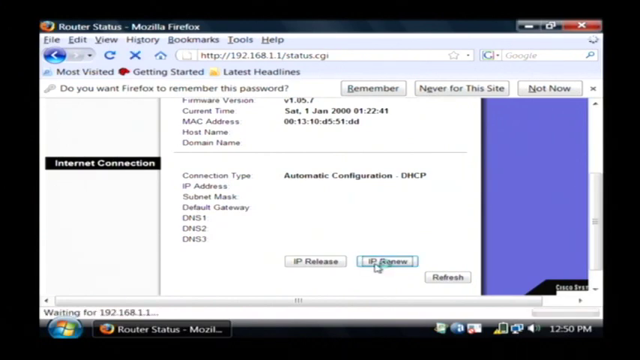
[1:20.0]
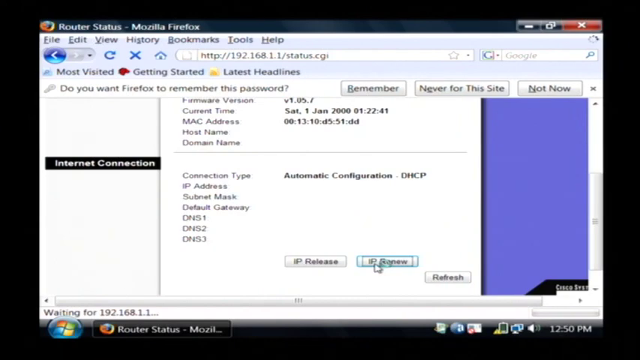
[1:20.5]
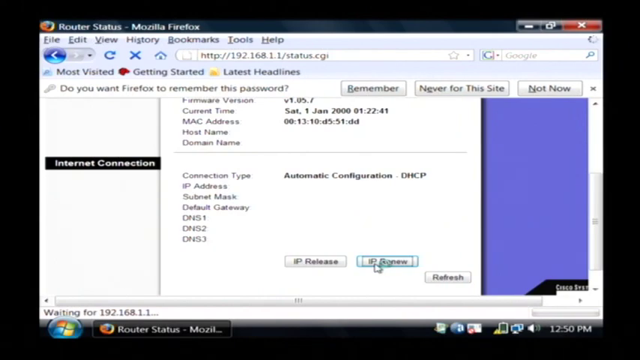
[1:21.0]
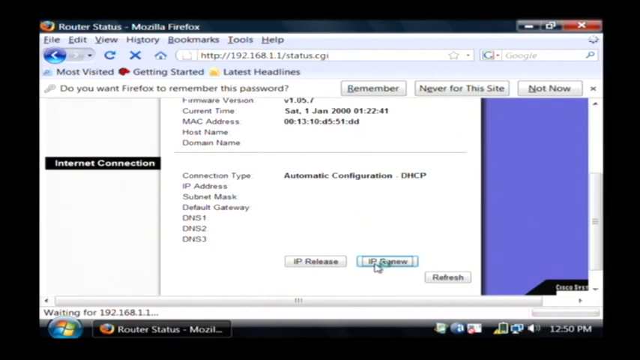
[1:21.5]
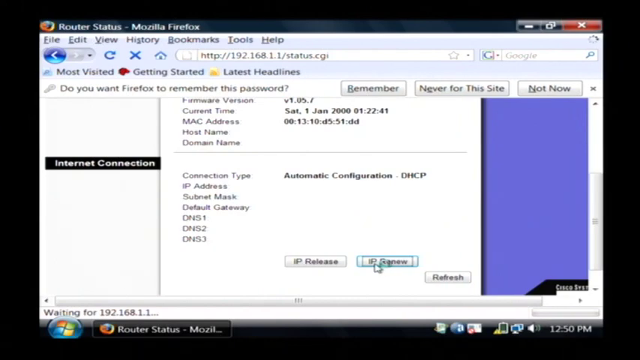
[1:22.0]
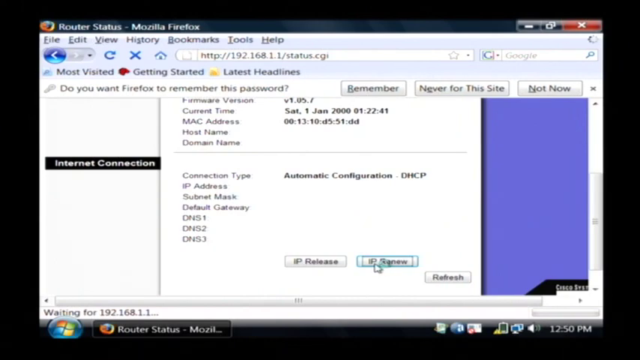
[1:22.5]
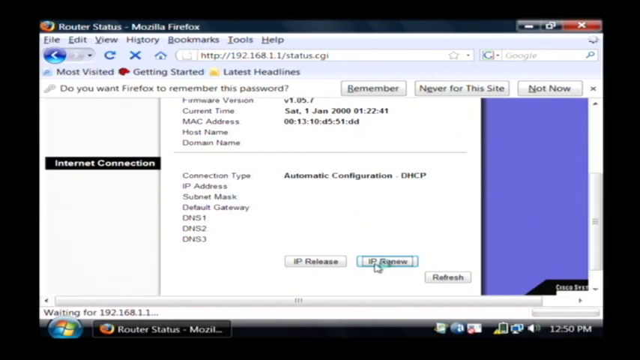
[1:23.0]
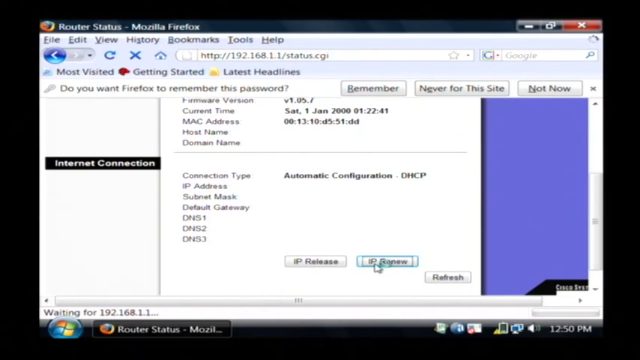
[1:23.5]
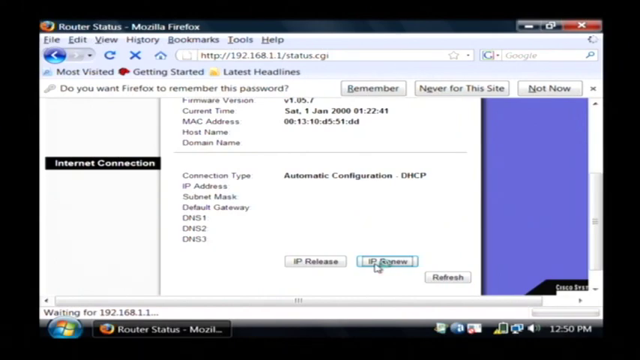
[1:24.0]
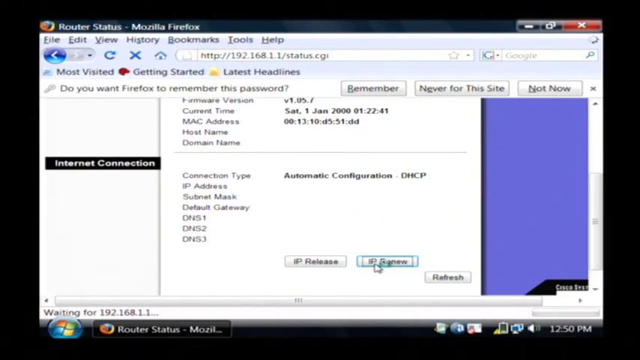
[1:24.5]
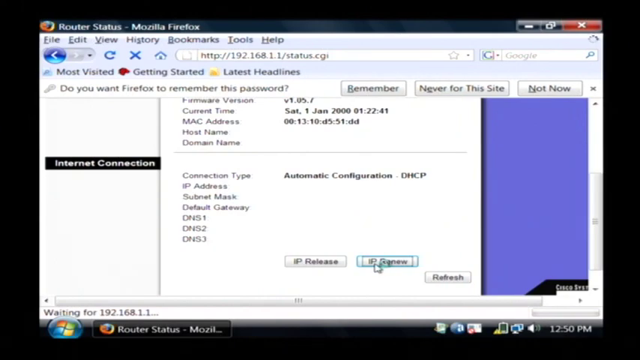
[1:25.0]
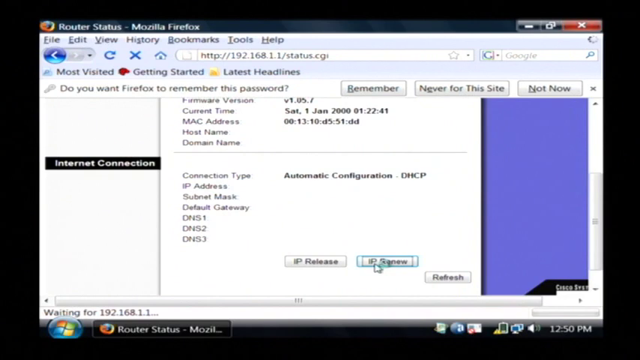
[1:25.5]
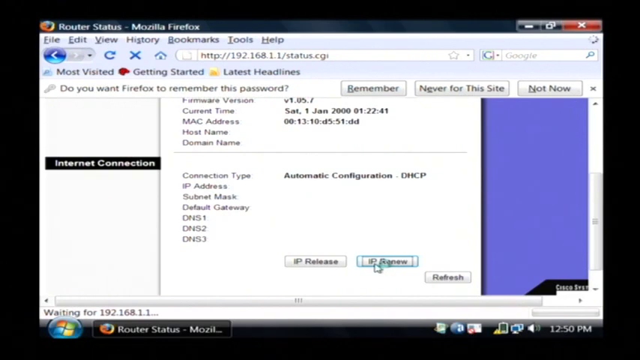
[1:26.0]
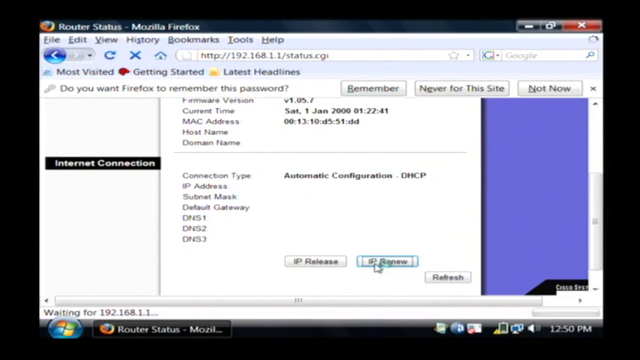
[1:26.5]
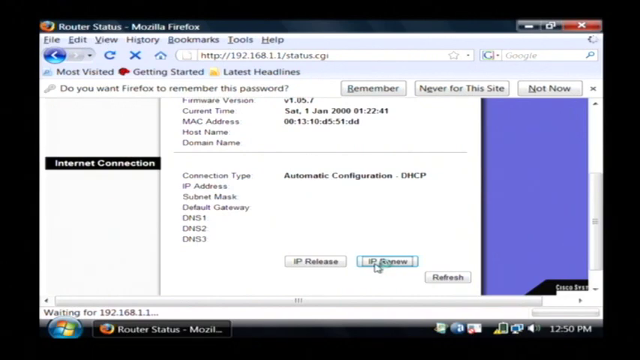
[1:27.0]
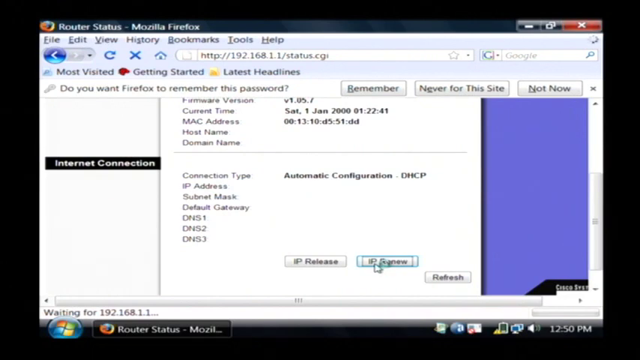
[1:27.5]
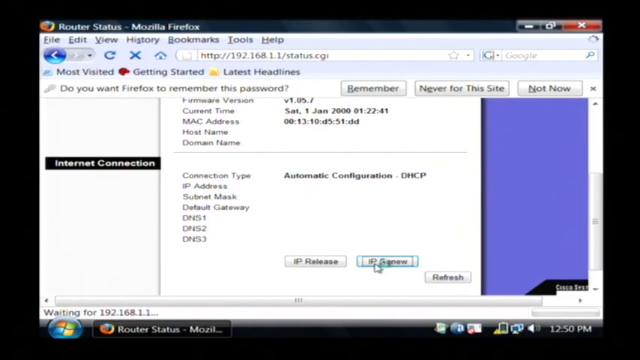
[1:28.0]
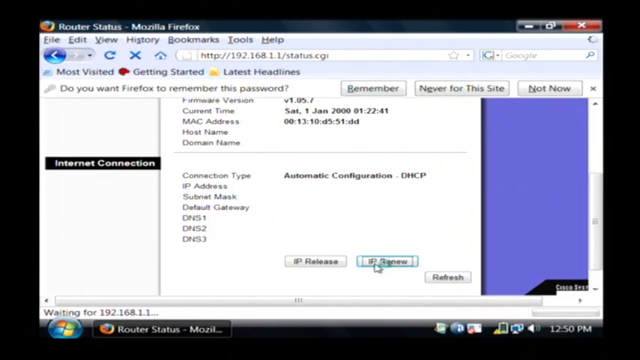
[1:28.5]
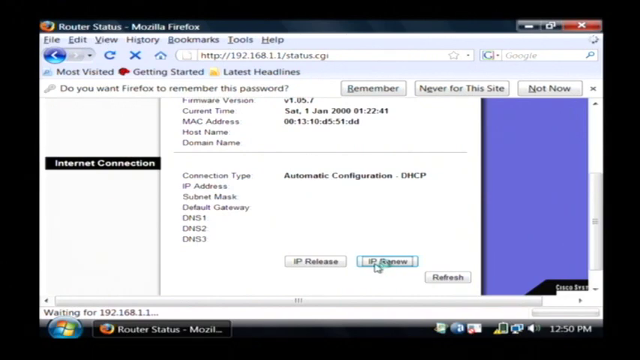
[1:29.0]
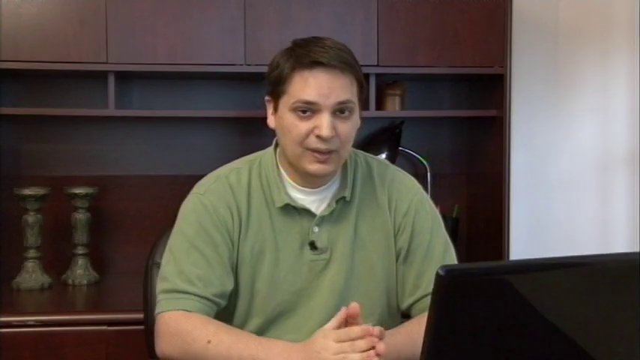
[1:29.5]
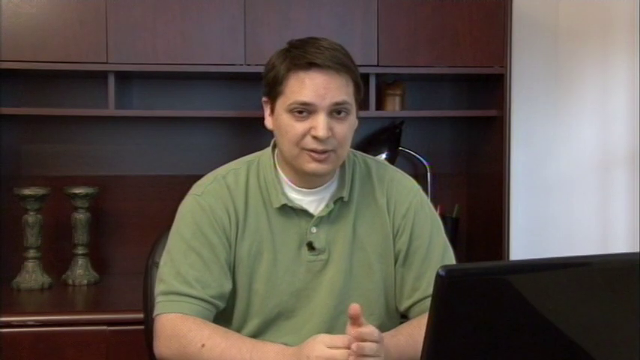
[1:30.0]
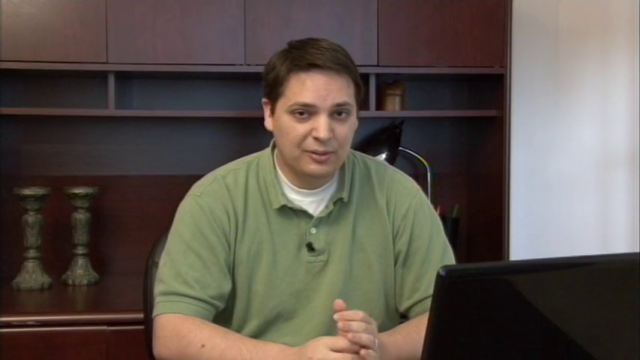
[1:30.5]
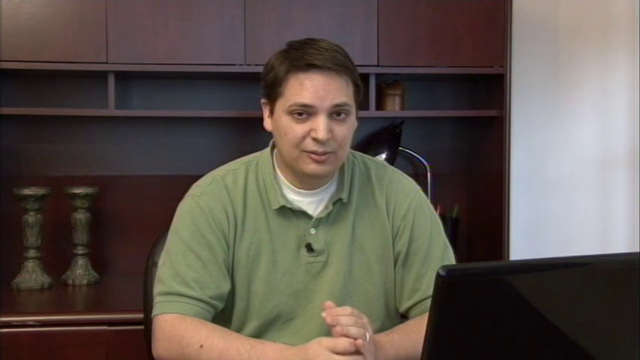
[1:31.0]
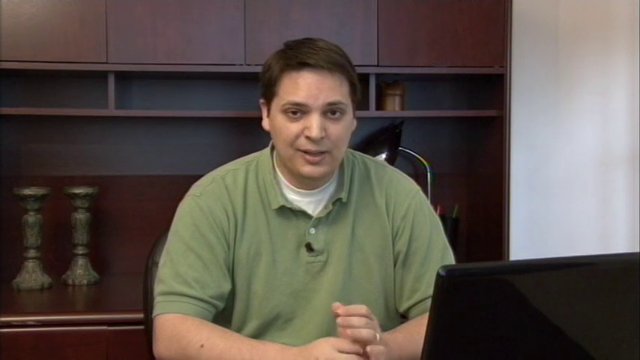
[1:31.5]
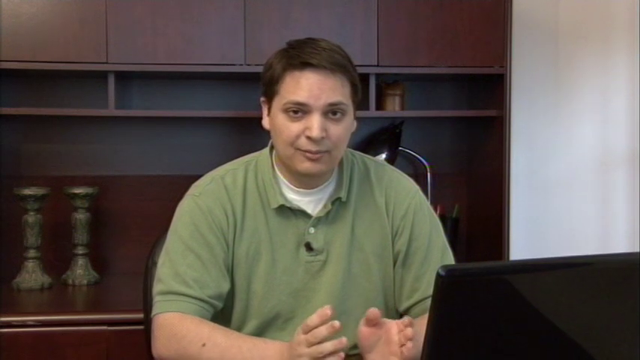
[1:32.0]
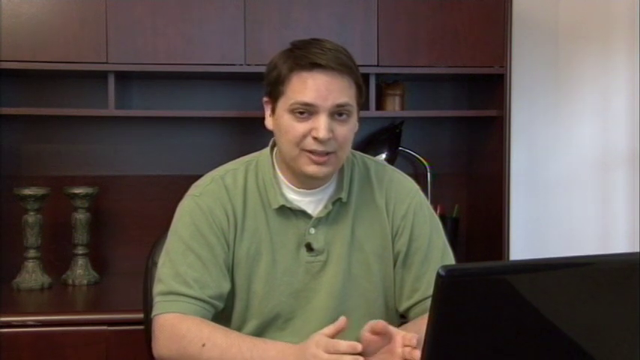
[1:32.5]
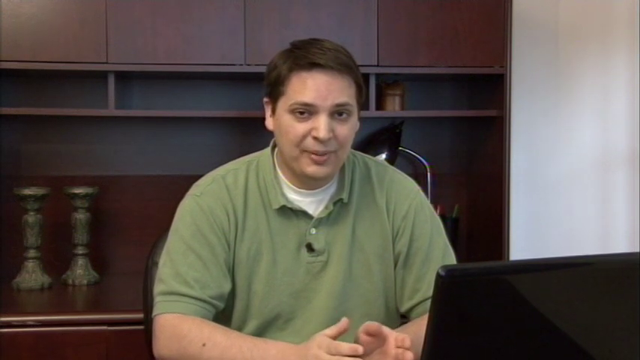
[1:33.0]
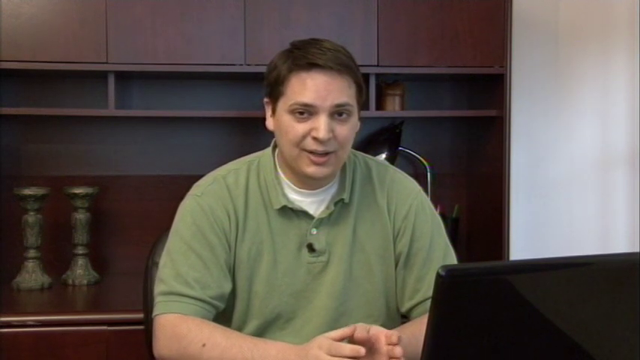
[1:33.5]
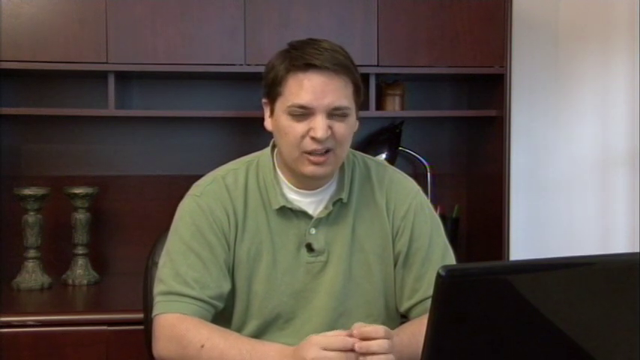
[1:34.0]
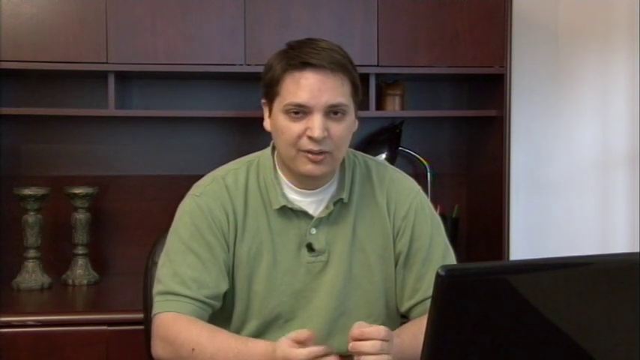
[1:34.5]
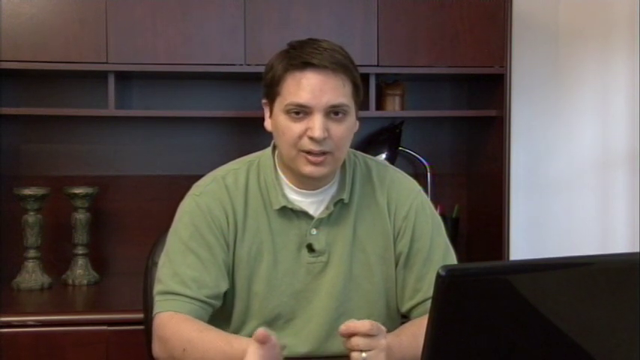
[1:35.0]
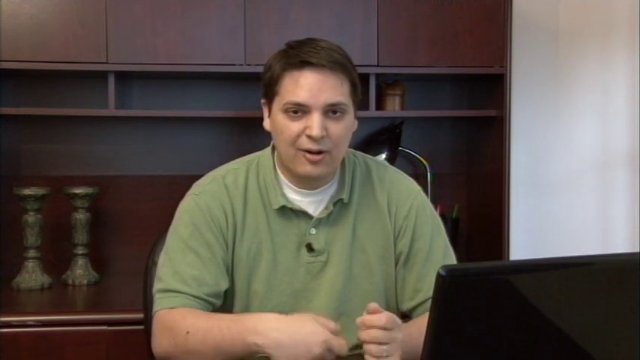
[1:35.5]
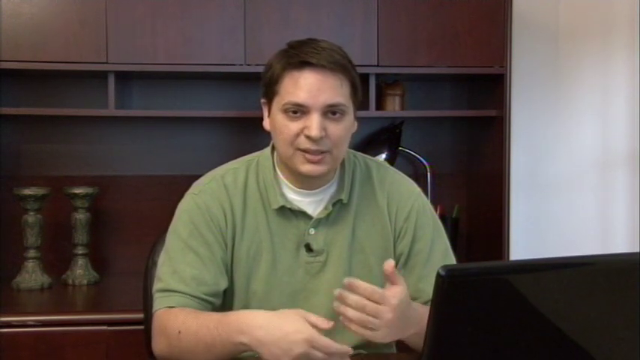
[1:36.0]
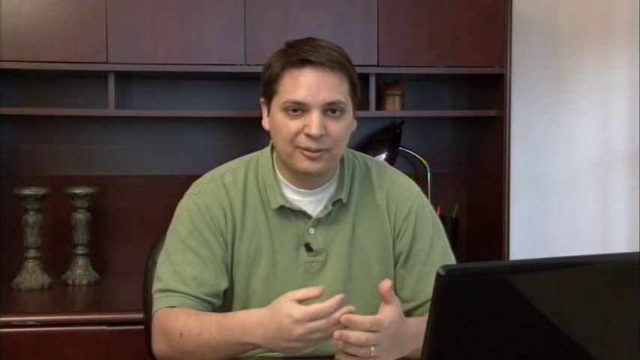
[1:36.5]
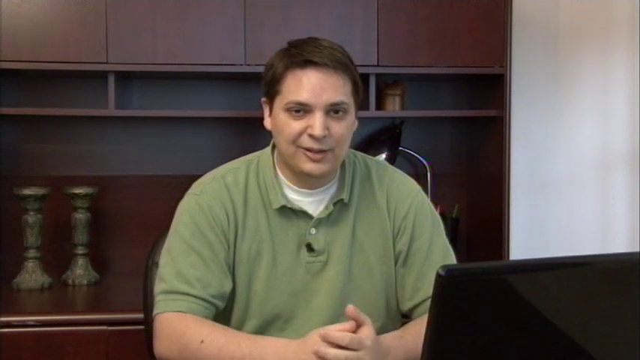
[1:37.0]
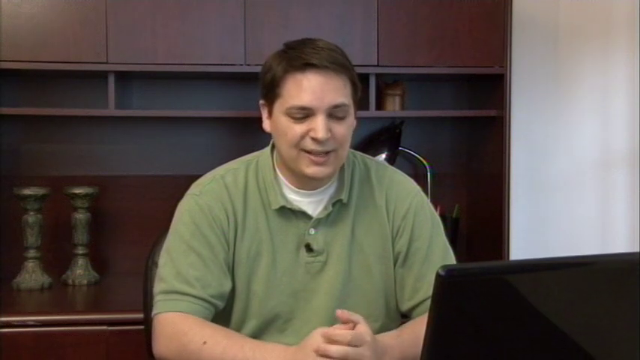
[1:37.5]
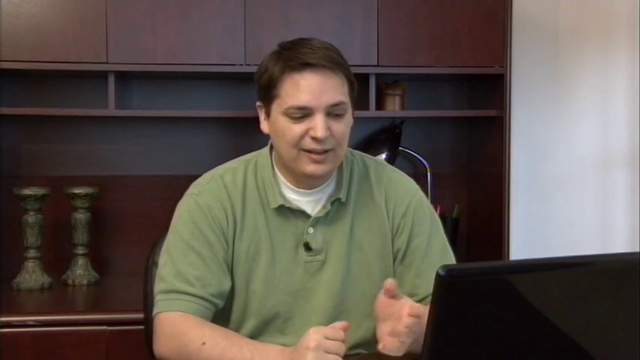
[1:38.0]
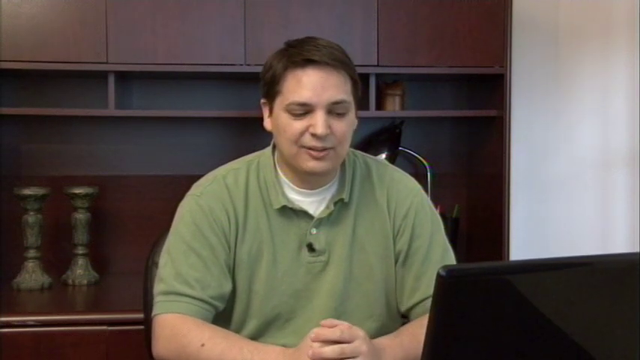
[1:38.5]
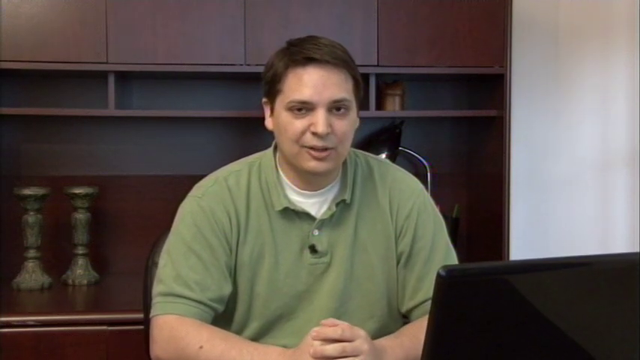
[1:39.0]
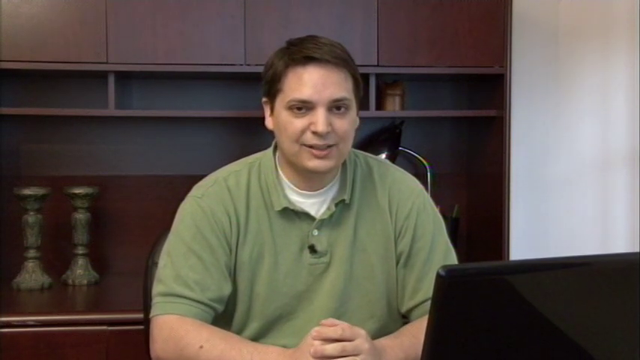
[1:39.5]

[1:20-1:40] The cursor hovers over the Renew button while the blue circle moves around in a circle beside it; the page looks like it is loading, and the mouse is not moving. The video cuts to the man at the table, still wearing the green collared shirt with a white shirt underneath. He is sitting at the same desk with some sort of screen in front of him, looking at the camera as he speaks to it. His left and right hands are visible and sort of gesturing, not toward anything in particular, just moving as he talks. He then points with his hand toward the computer screen, not at anything in particular, probably referencing the computer.